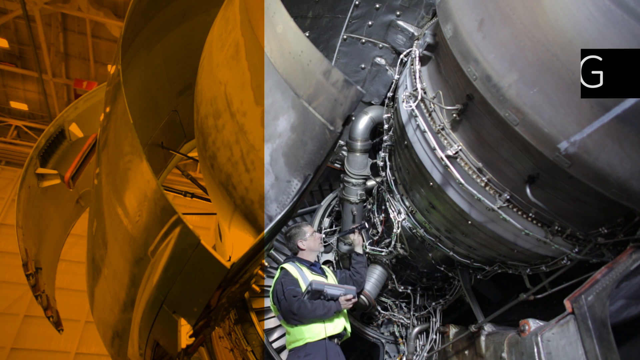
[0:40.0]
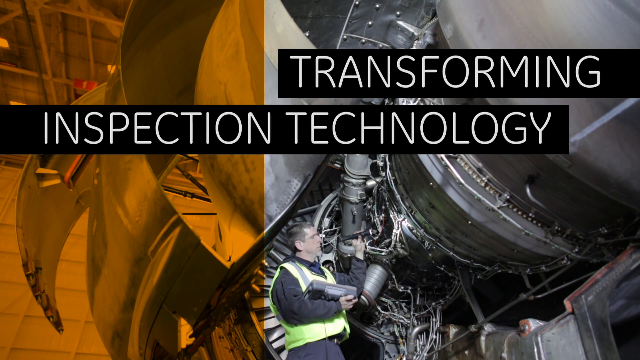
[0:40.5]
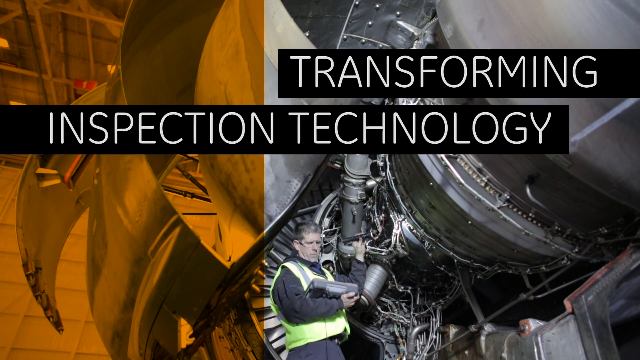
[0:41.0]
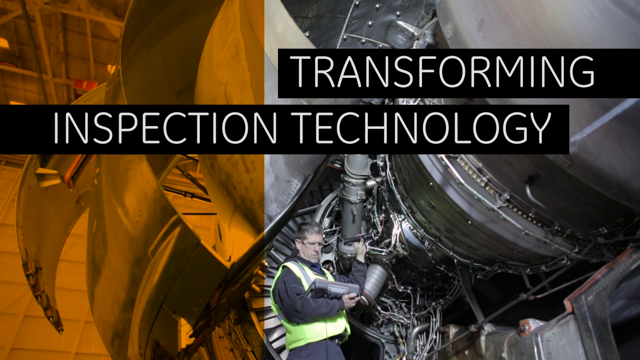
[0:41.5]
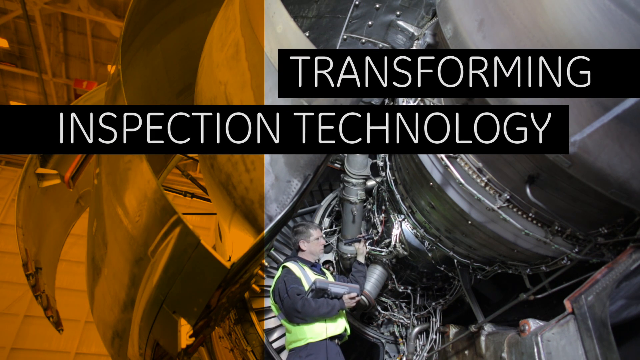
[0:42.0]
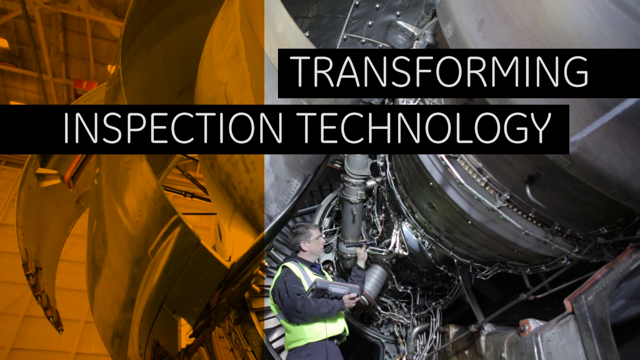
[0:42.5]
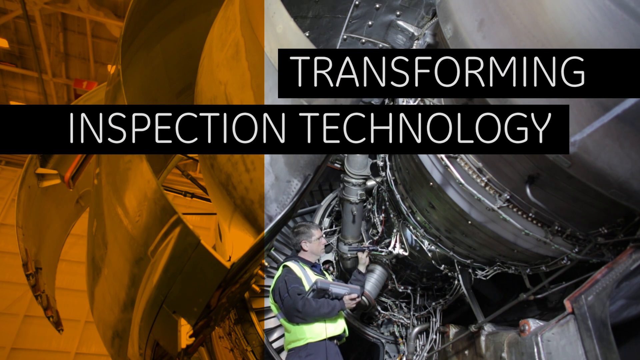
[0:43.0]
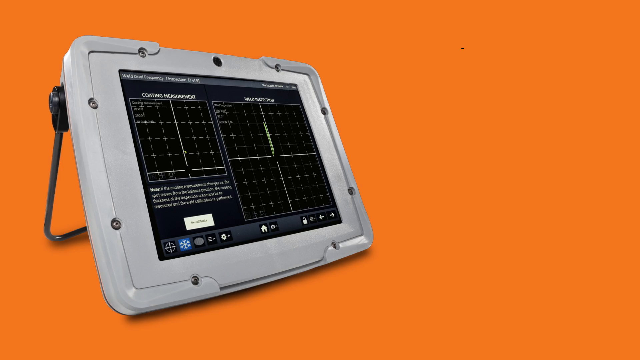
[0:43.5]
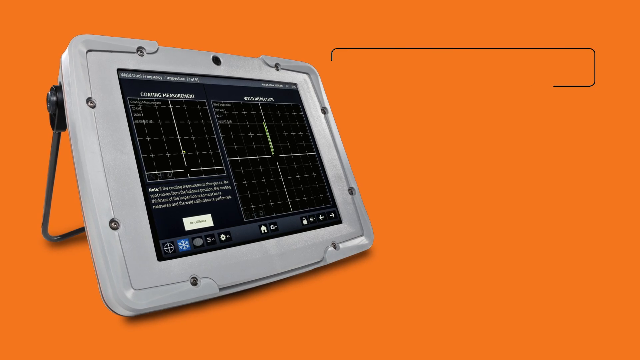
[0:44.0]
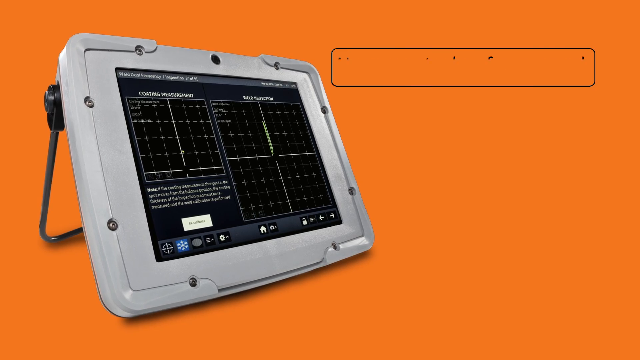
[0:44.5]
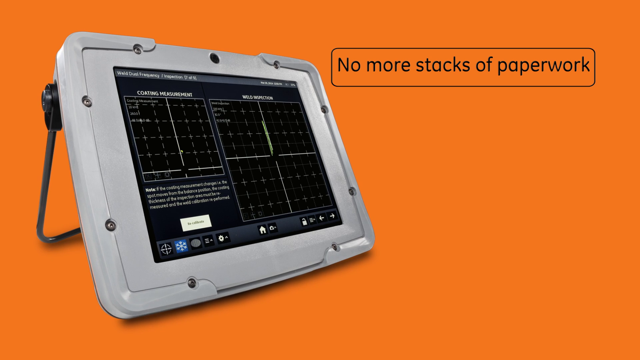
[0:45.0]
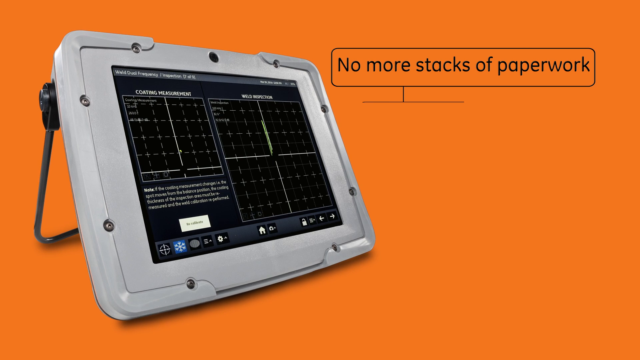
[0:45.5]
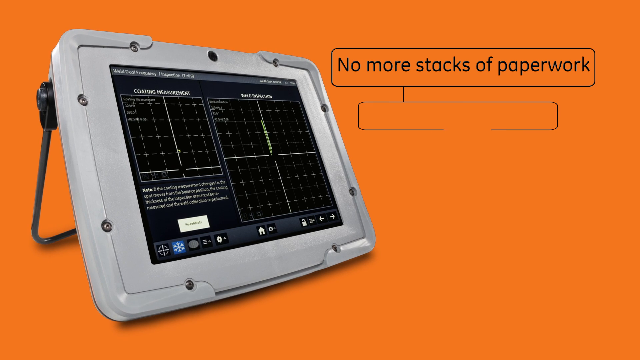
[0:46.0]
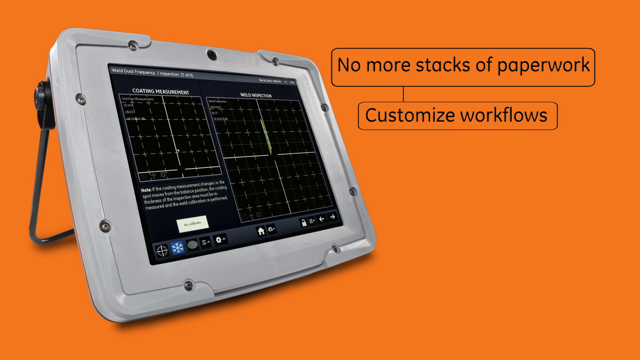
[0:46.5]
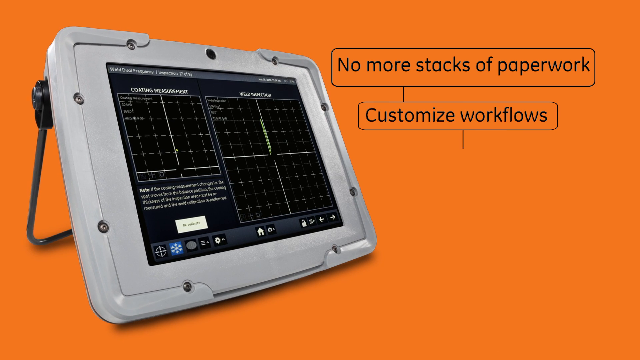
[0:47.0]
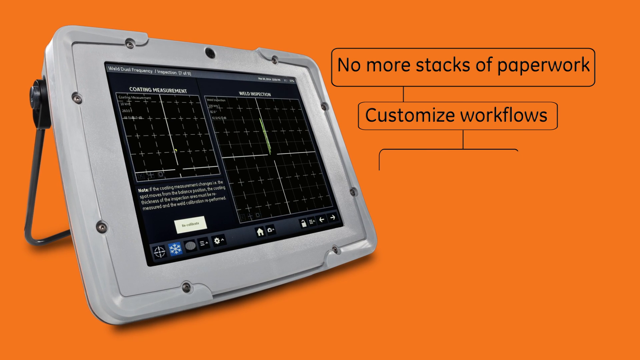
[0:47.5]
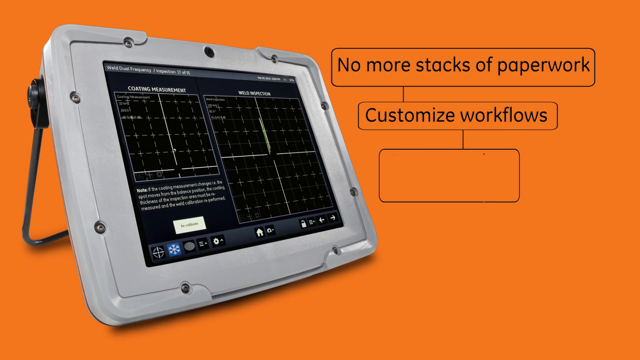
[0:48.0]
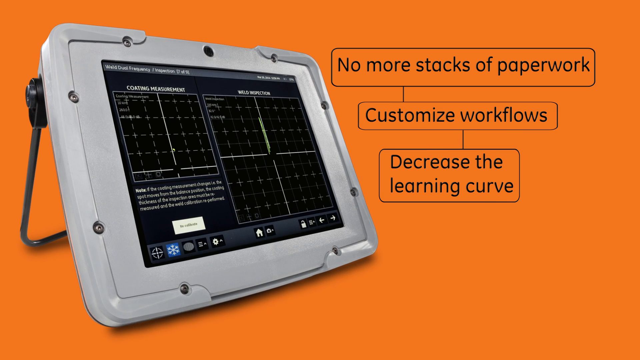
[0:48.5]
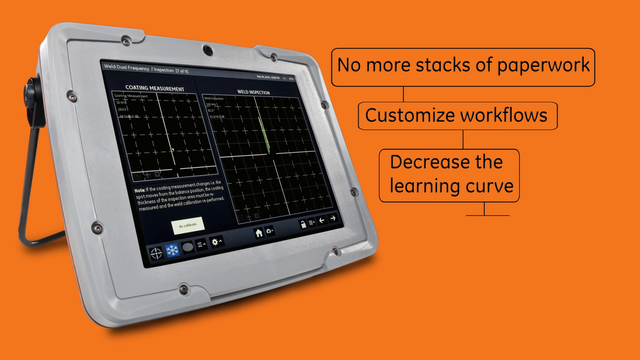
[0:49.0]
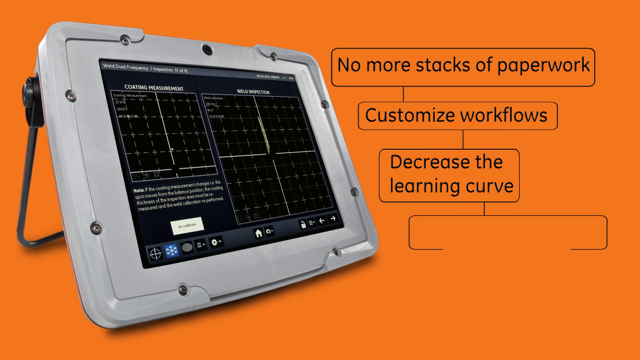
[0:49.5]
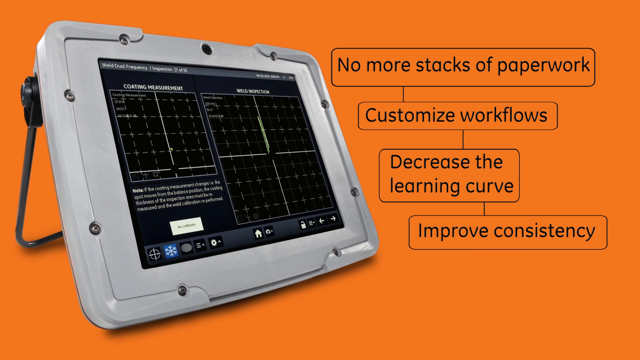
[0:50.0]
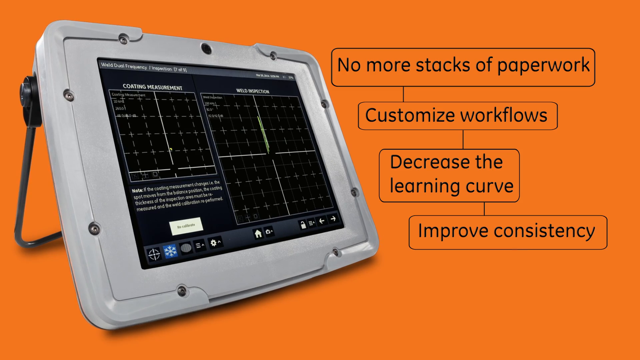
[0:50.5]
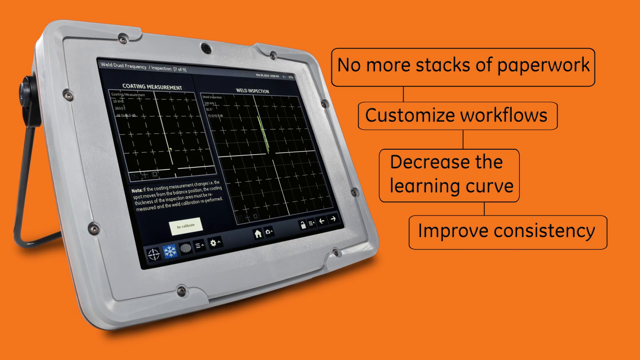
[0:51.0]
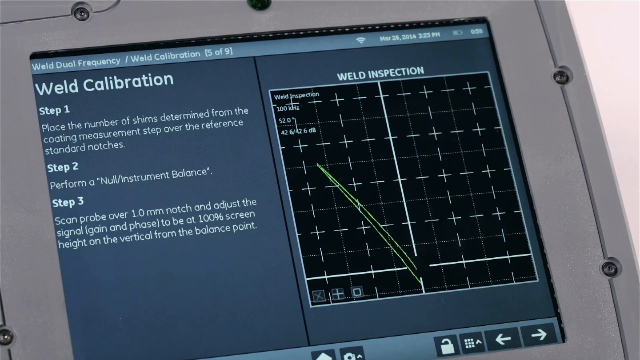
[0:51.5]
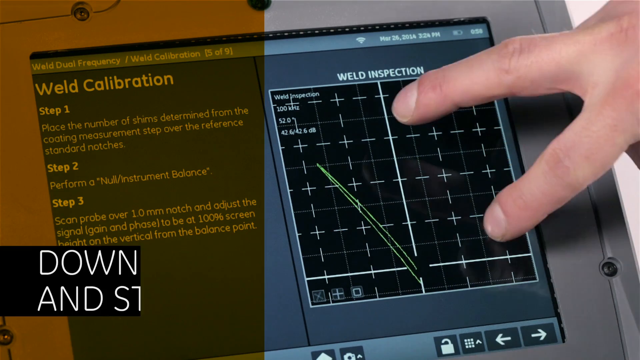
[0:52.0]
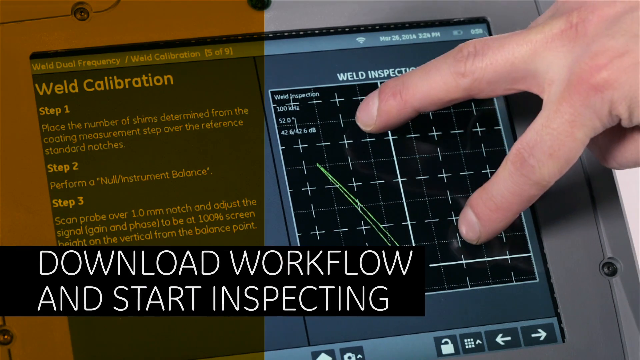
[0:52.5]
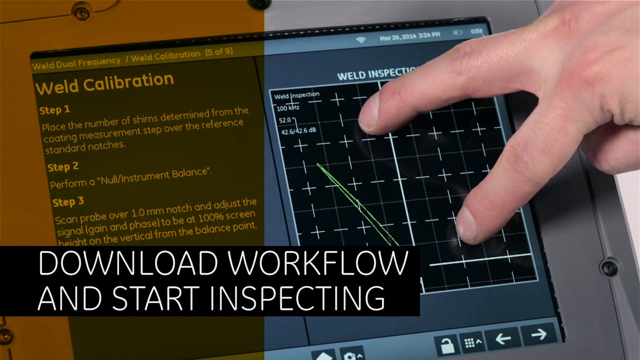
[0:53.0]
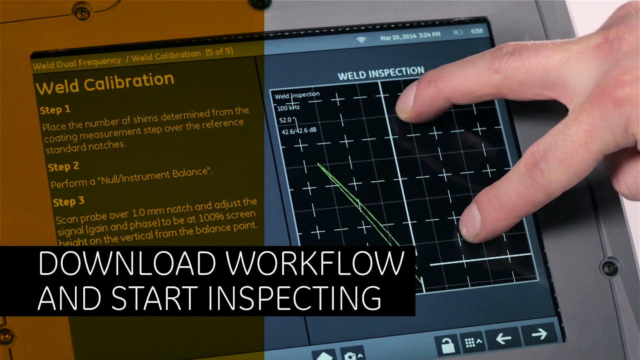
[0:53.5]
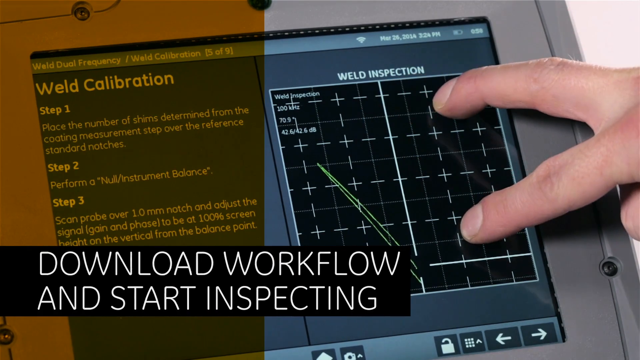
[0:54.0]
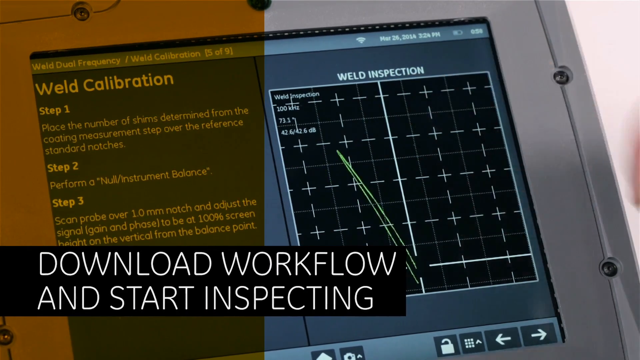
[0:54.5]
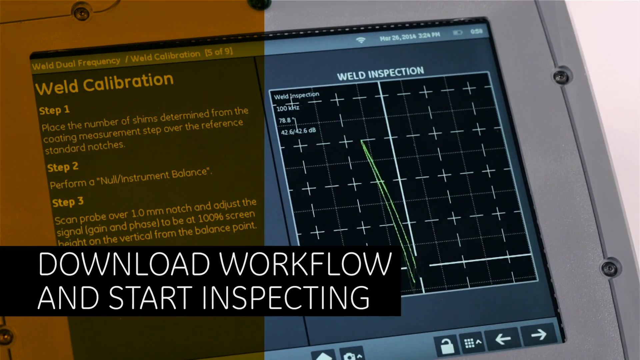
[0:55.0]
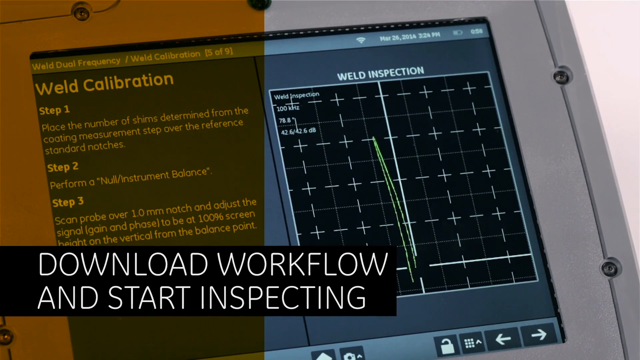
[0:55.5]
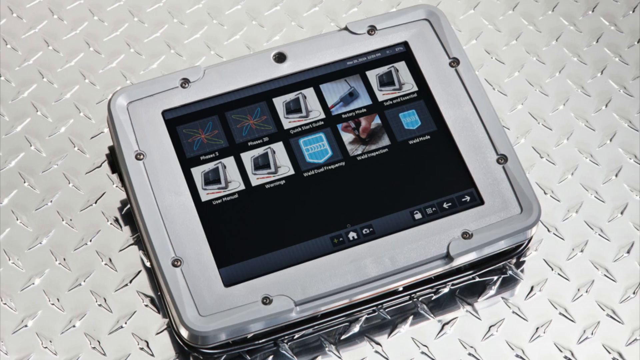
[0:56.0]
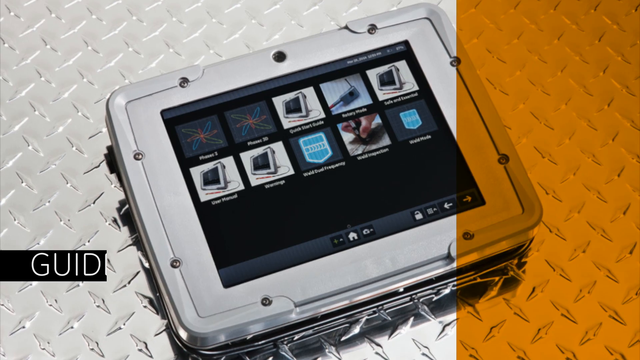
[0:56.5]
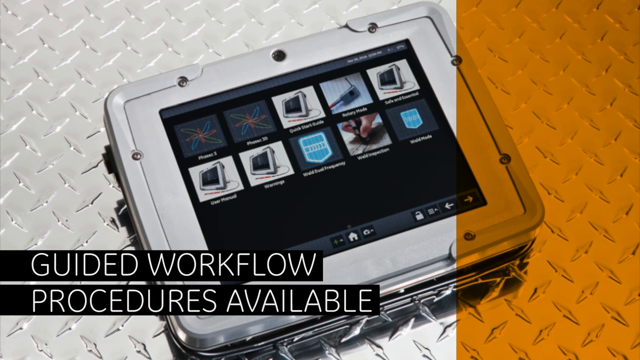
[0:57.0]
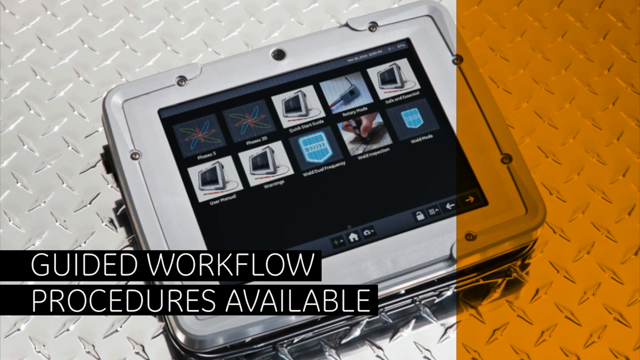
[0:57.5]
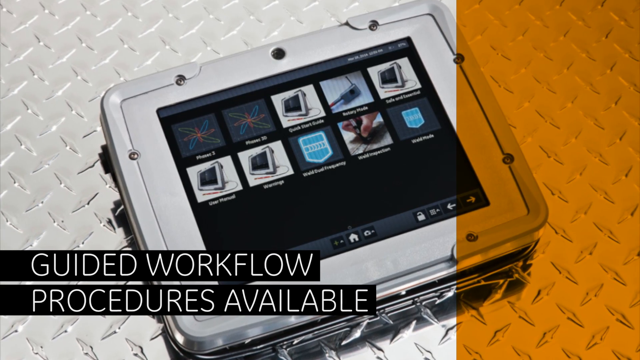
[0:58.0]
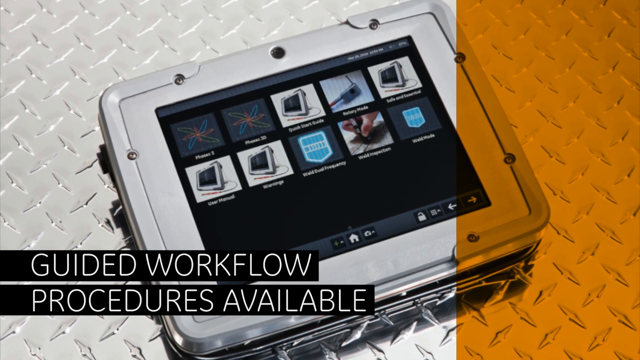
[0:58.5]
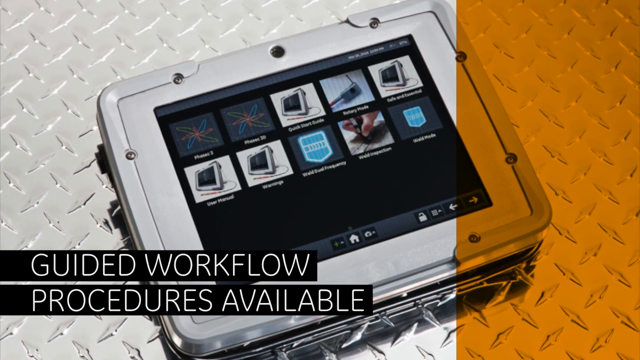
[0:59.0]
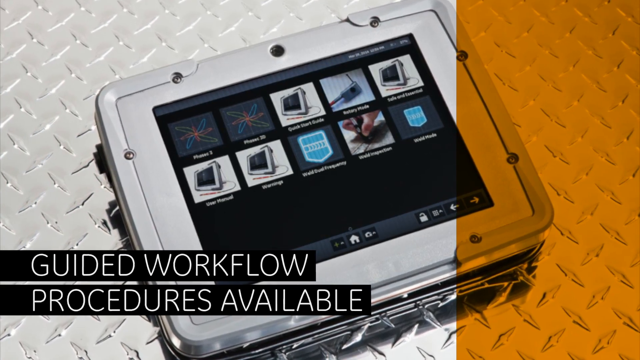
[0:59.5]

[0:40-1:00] The device is shown to be a weld inspection device. The scene begins with the title "transforming inspection technology" and a person performing an inspection while looking at his tablet, wearing a yellow safety vest and safety glasses. The scene then cuts to a breakdown of what the device offers: no more stacks of paperwork to be filed, customizable workflows, a decreased learning curve and improved consistency. Next, two fingers touch the screen, demonstrating that it is a touchscreen. The screen shows weld calibration with steps one, two and three, and as the fingers curve, the lines on the graph curve with them.